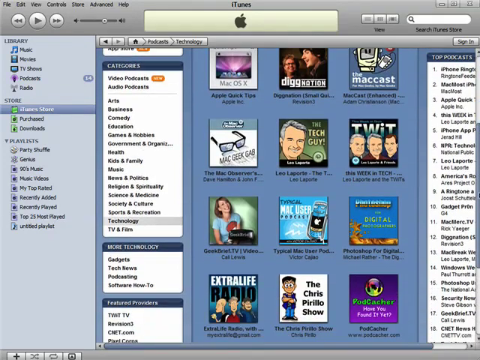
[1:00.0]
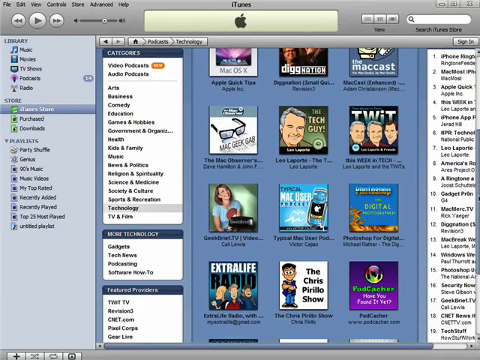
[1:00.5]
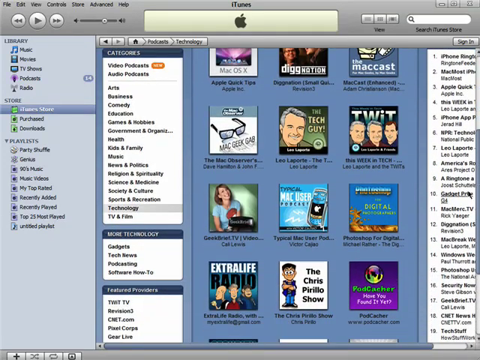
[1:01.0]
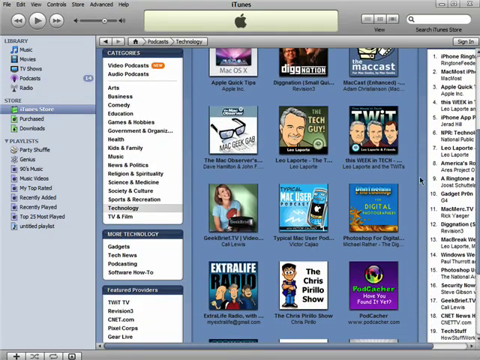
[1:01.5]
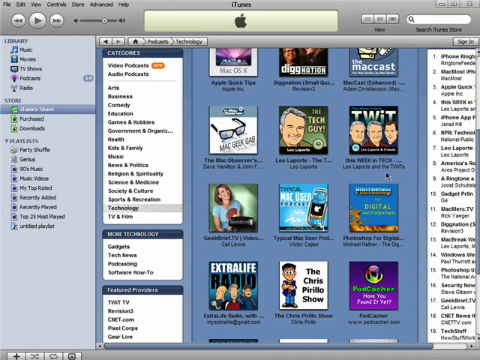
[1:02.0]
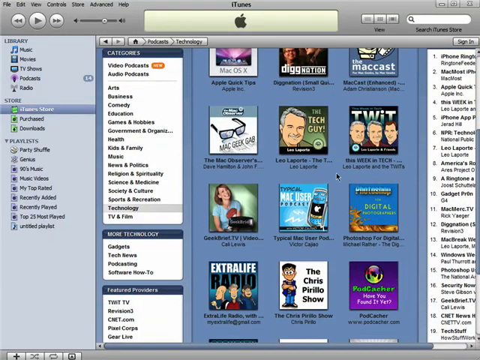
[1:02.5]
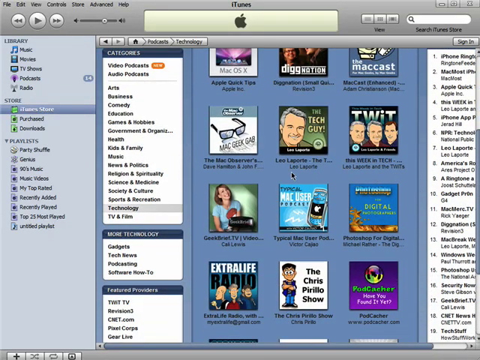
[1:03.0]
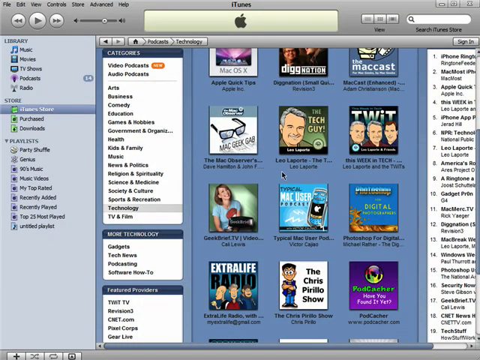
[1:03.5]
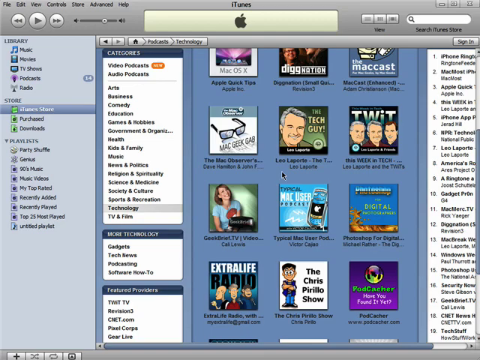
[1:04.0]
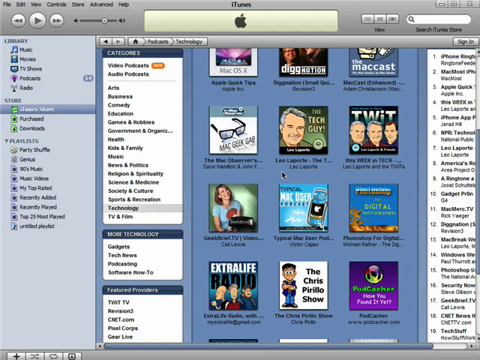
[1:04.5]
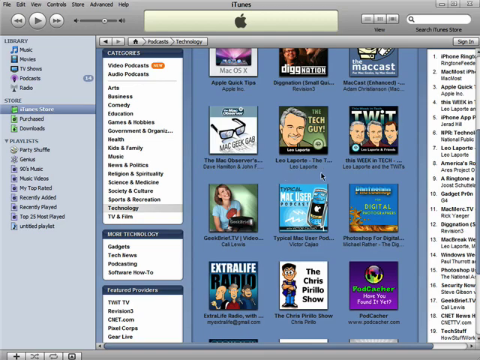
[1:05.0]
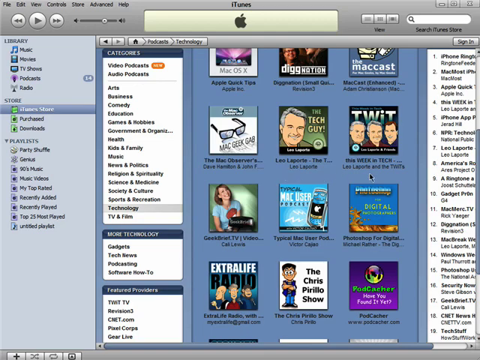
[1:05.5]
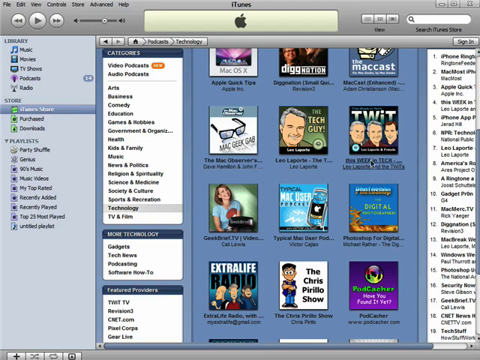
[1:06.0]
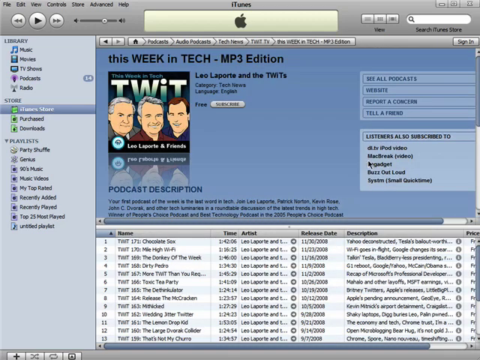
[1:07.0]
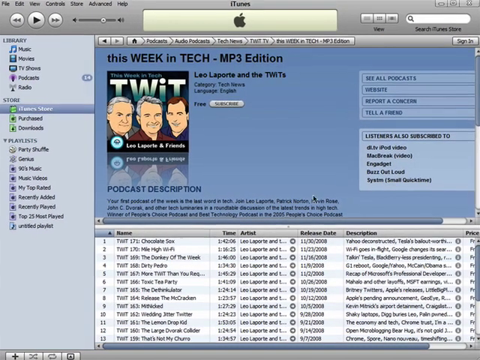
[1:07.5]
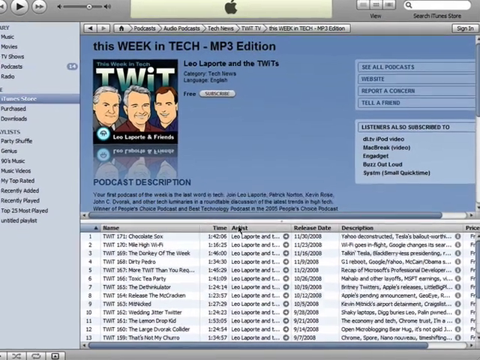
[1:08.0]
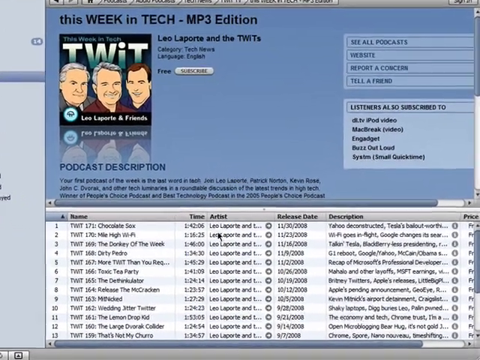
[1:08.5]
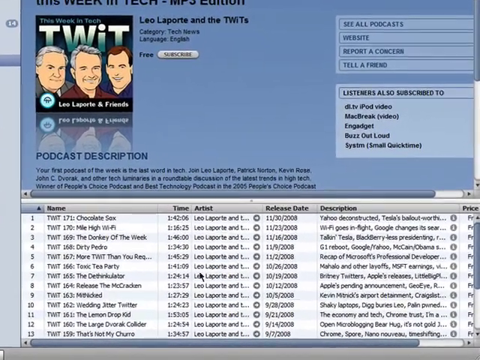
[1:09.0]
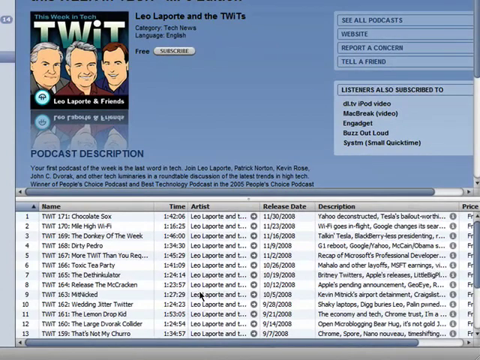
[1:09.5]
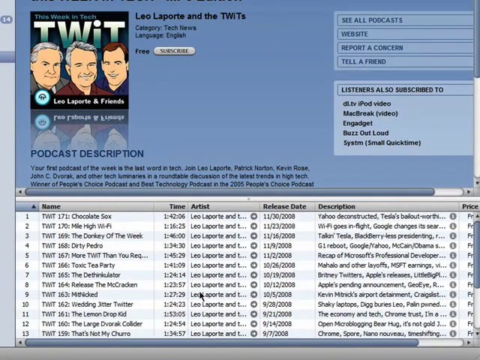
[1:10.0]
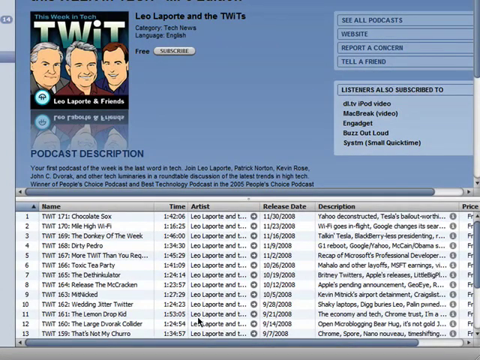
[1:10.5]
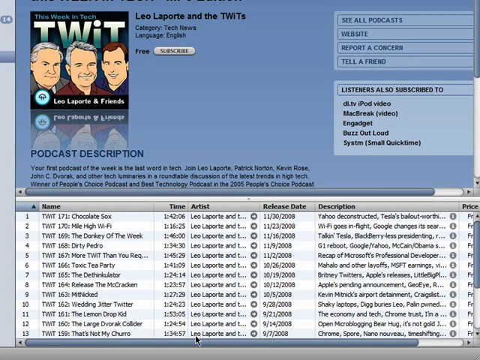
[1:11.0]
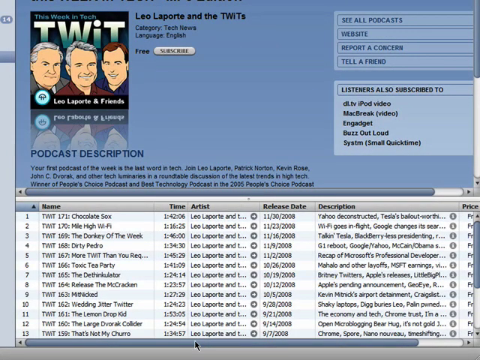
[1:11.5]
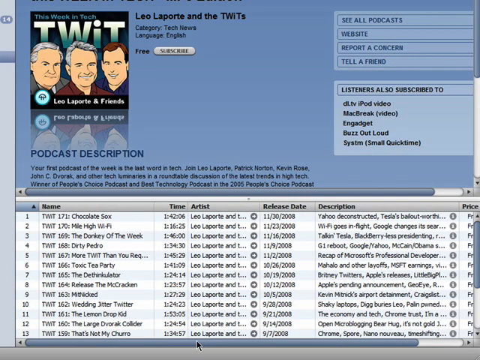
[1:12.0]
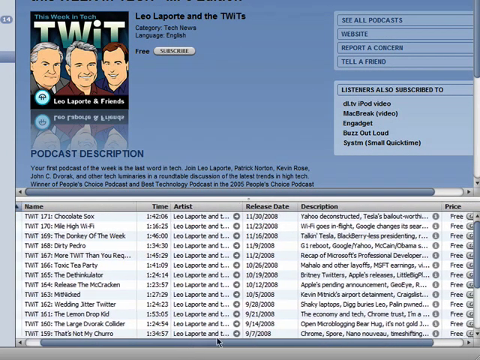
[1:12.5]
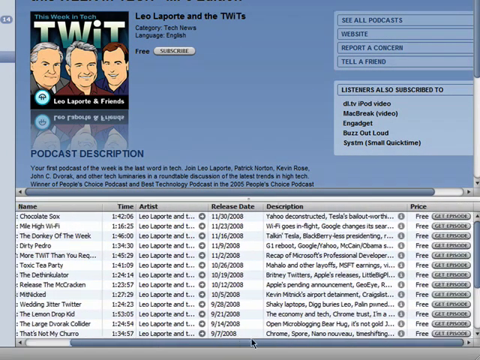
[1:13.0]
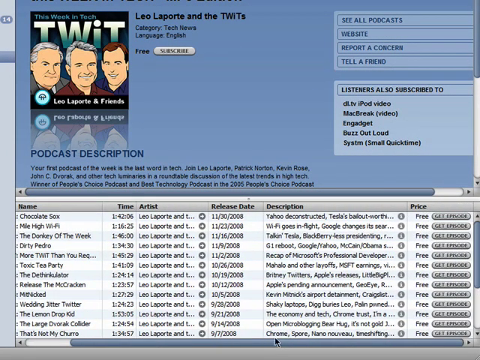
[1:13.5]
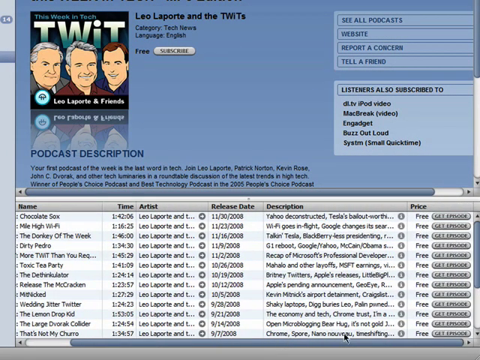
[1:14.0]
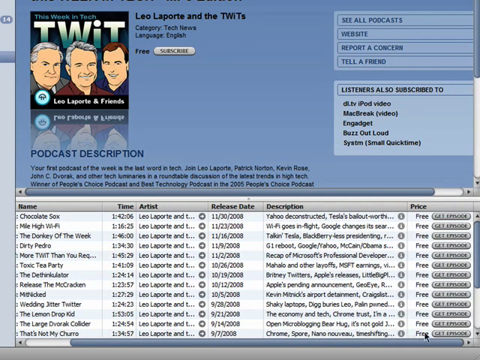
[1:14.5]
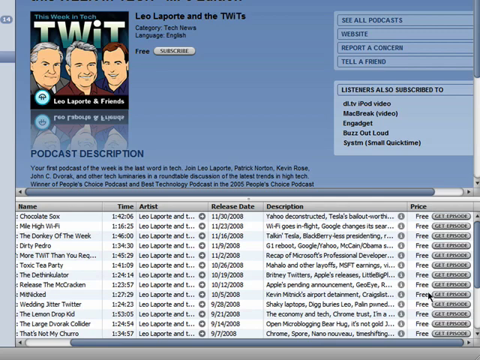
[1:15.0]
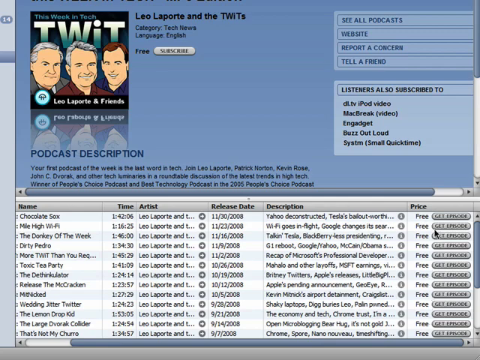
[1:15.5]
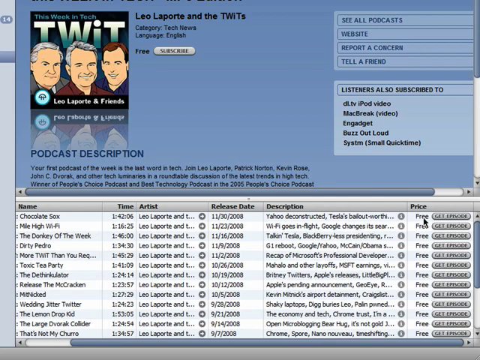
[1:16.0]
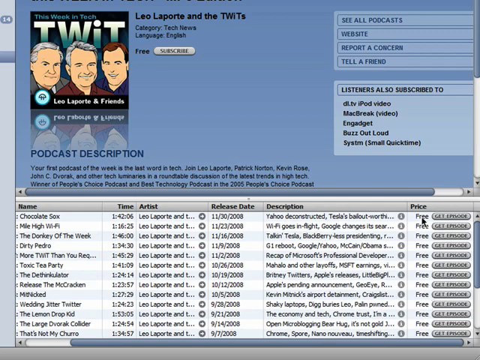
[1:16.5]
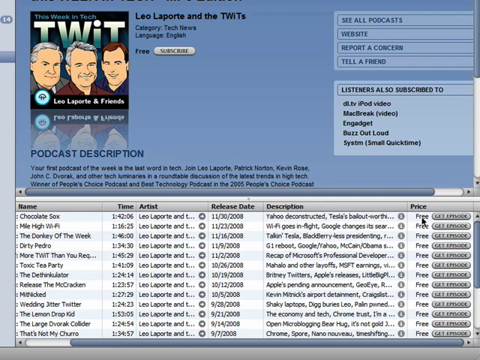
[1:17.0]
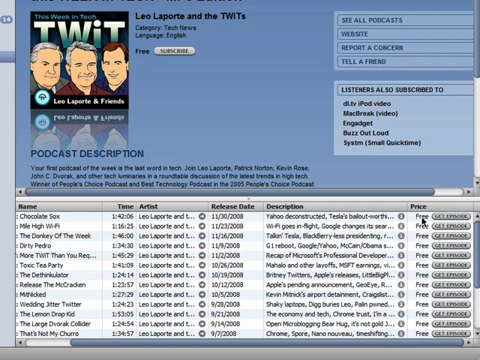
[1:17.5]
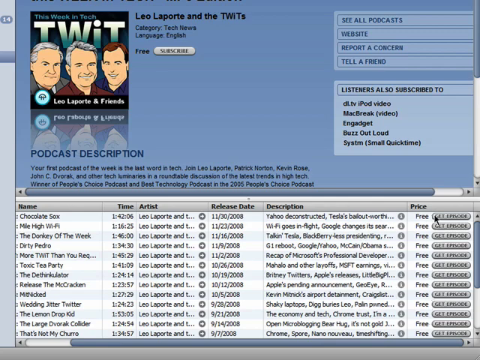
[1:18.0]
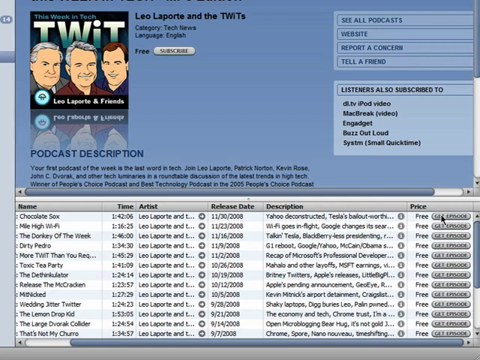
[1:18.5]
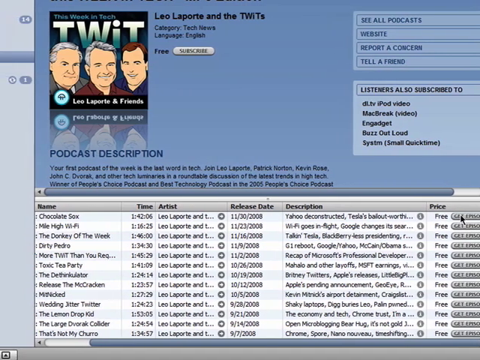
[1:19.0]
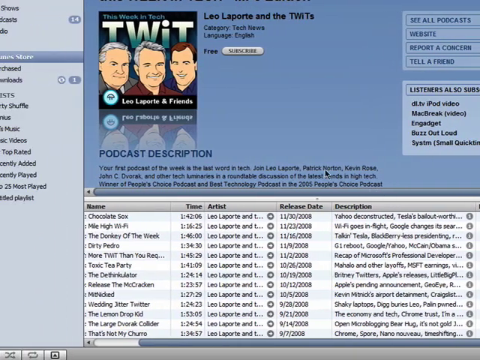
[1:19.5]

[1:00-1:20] This section of the iTunes page shows what look to be several different podcasts, each with a logo. Mac OS X, which is possibly not a podcast, is visible, along with Dignation, the Mac Cast, Mac Geek Gab, The Tech Guy, TWIT, Mac User, Extra Life Radio, and The Chris Pirillo Show. Many of them seem to be Mac-themed. The person is still using the cursor to scroll around, and appears to select the TWIT podcast, called This Week in Tech, MP3 edition. Its logo is shown larger: a cartoon-style image of three men, two with gray hair and one with darker hair. Below the image is what looks to be a list of all the episodes of the podcast.